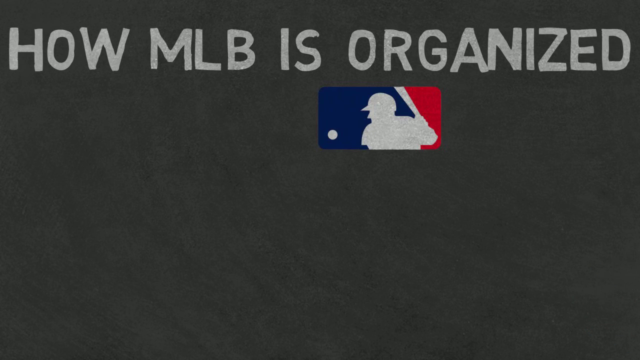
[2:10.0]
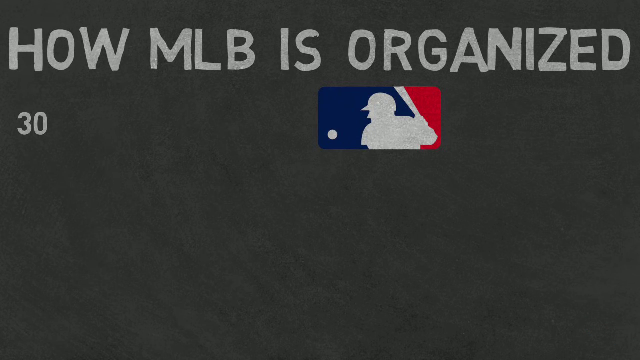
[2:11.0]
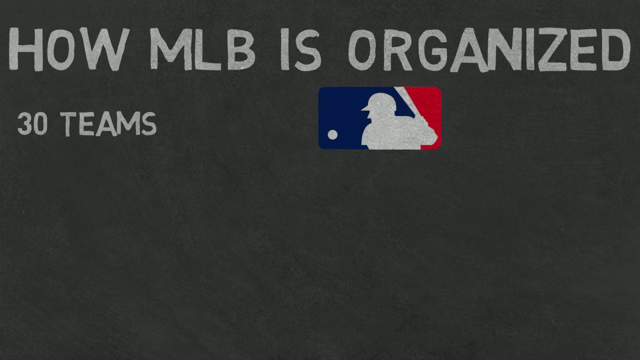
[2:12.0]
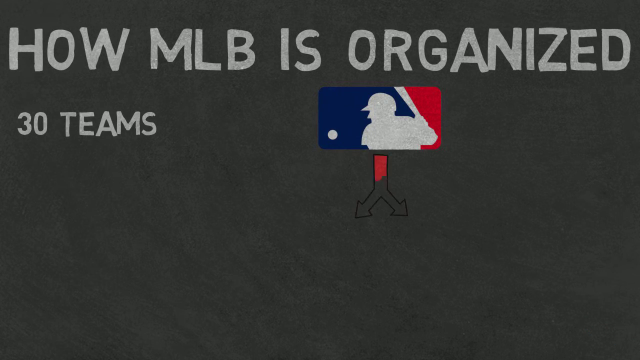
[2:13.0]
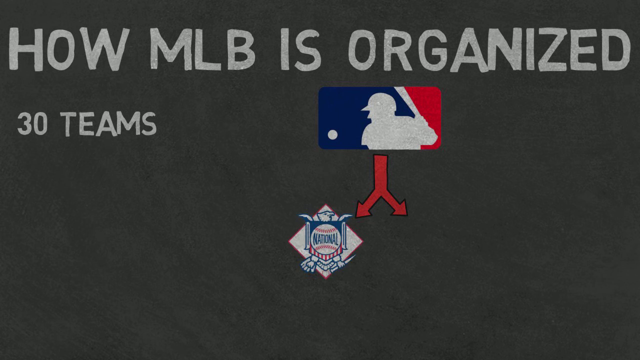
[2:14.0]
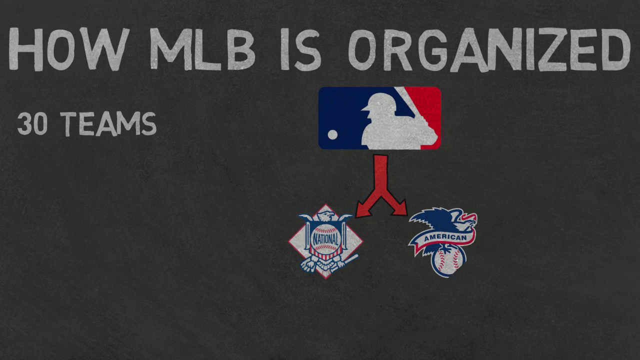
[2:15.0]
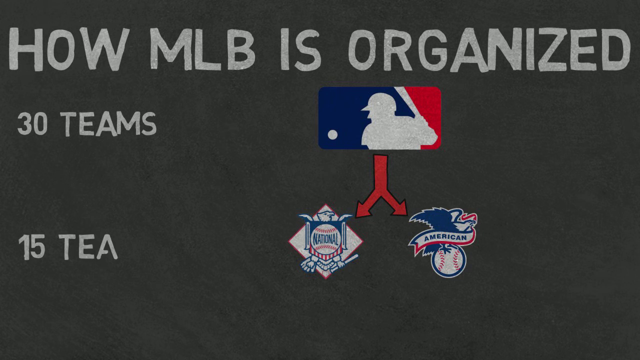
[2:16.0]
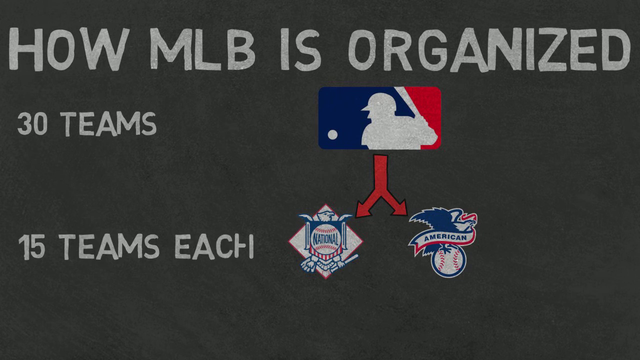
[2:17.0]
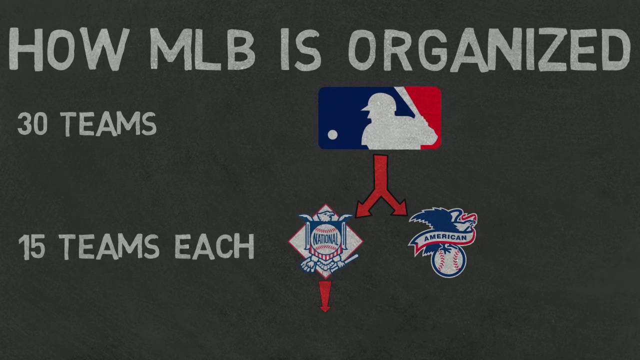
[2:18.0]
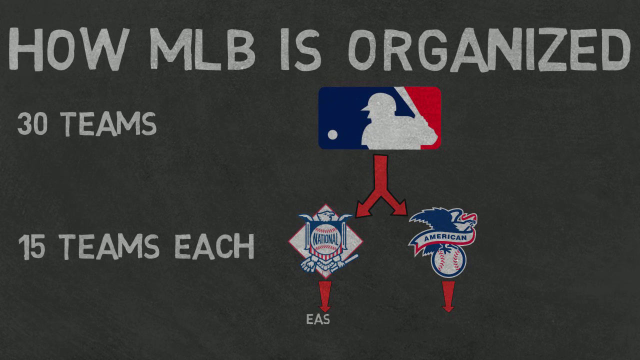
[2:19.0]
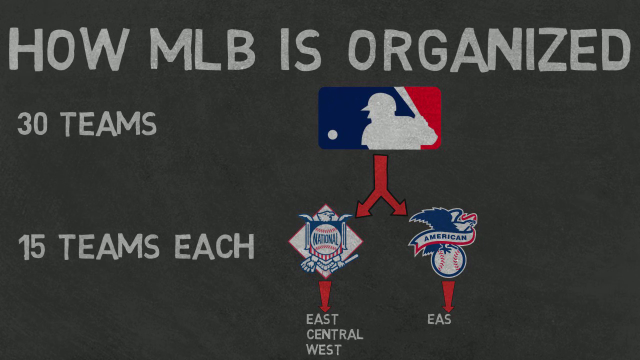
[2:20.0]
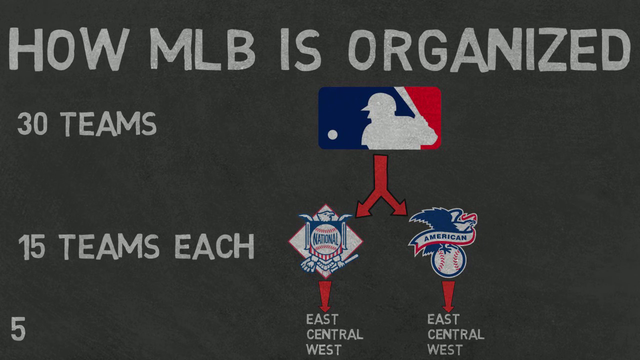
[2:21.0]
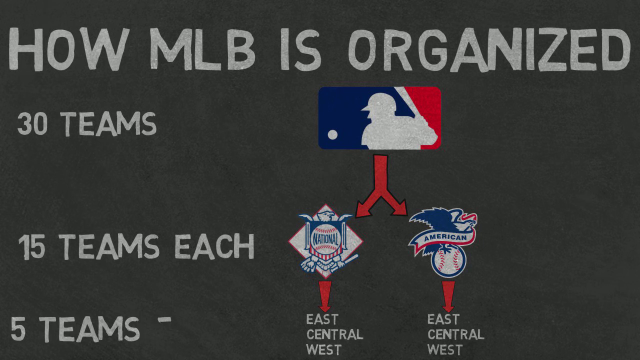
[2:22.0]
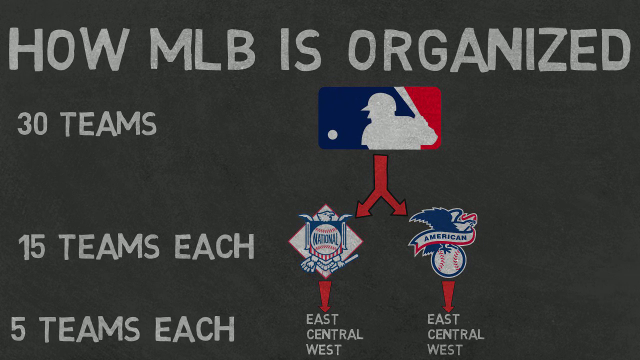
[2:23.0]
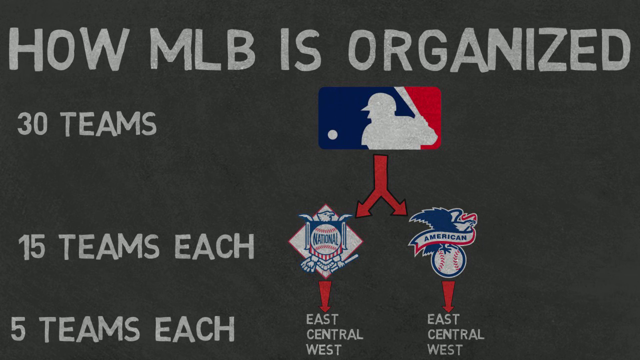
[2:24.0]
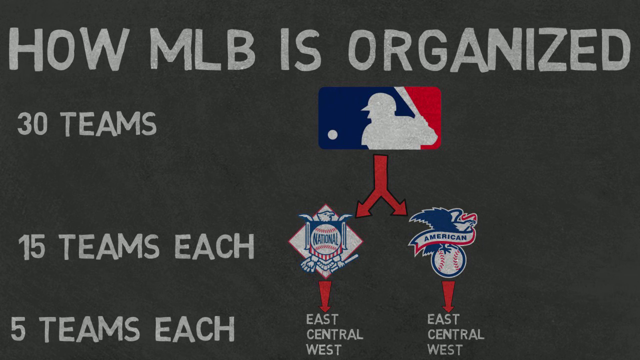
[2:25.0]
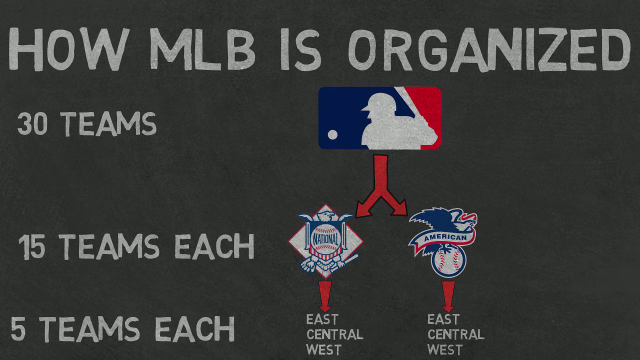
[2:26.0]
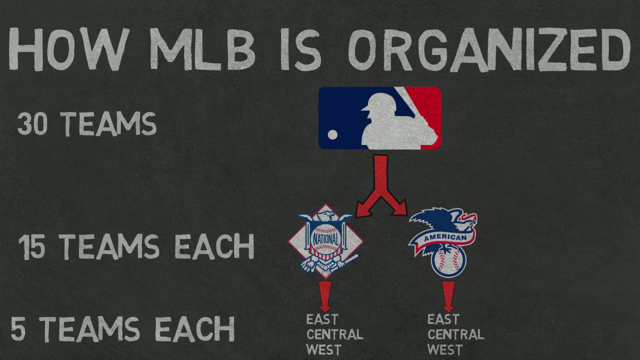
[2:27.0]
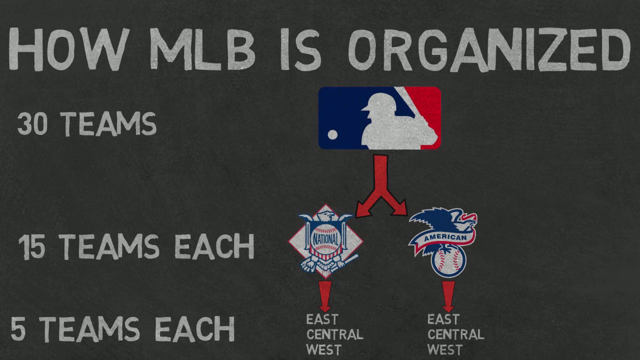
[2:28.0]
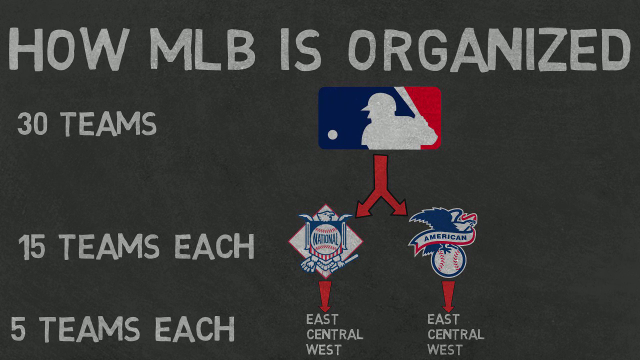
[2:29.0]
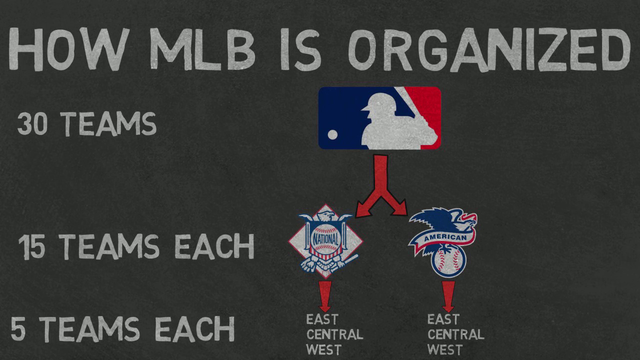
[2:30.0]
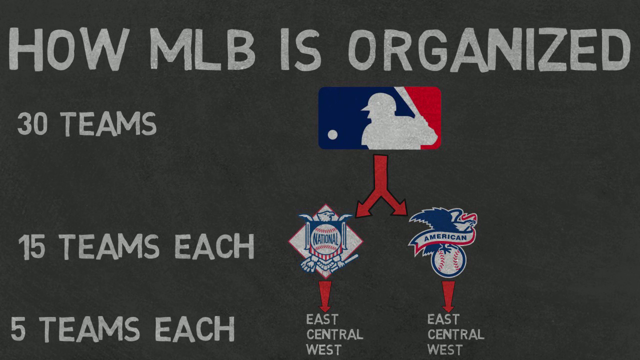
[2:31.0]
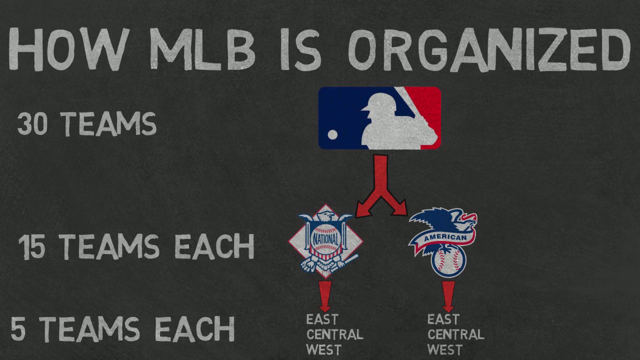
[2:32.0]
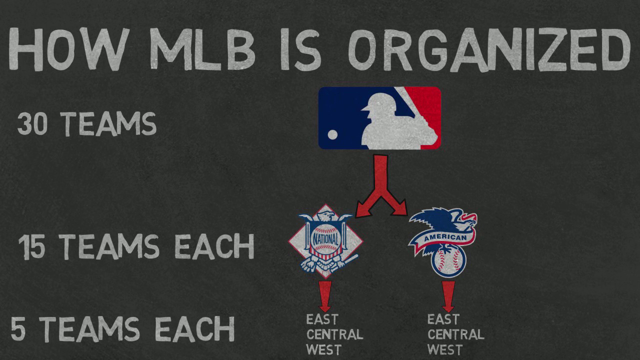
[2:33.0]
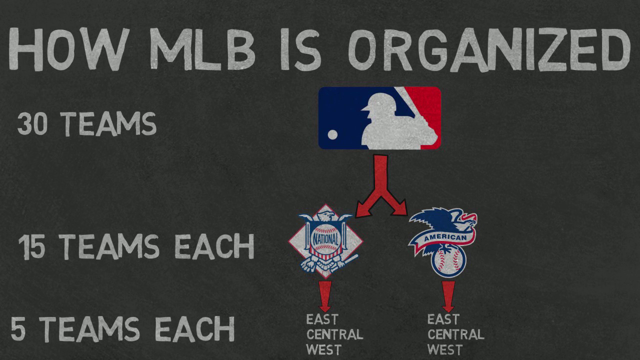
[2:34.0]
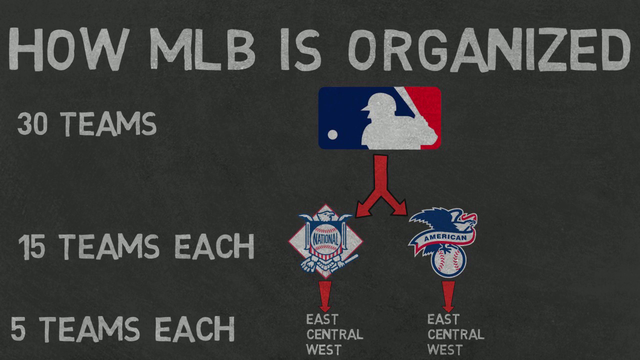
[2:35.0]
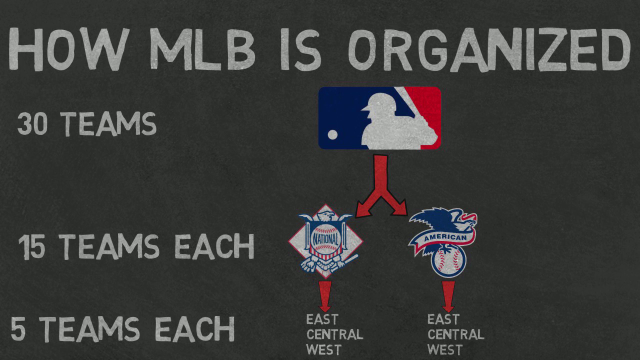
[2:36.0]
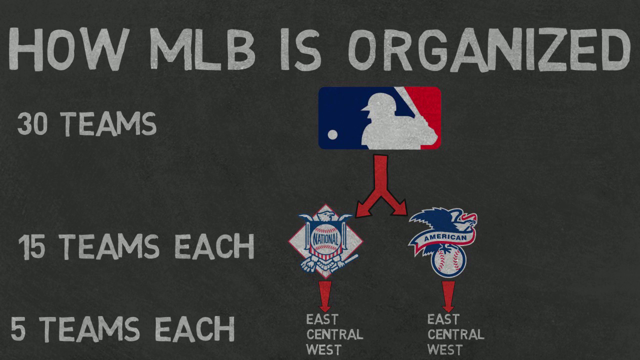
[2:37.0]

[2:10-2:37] A summary of how MLB is organized is shown in white chalky font on a gray background. Next to the MLB logo at the bottom it says "30 teams", and it branches out to the National and American logos, next to which it says "15 teams each". Below that it says "five teams each". Under the National and American logos, another red arrow points directly downward, and below are "East", "Central" and "West" in the chalky font, the smallest text in the video, with "five teams each" under them. The image stays on screen for a few seconds as the video ends. The writing appears to be handwritten, as it is not very organized.